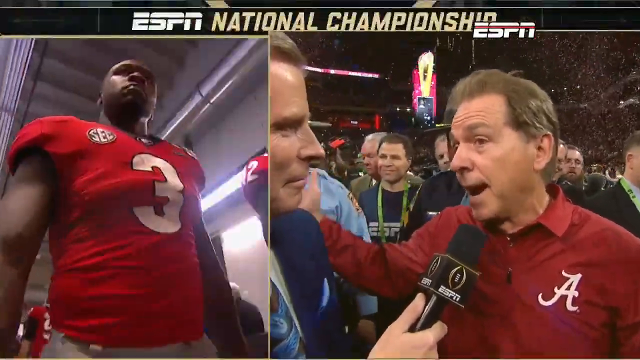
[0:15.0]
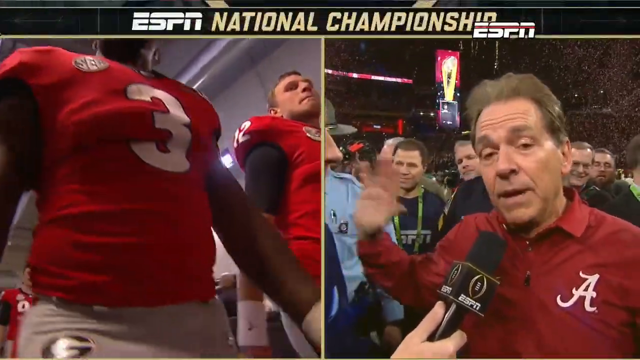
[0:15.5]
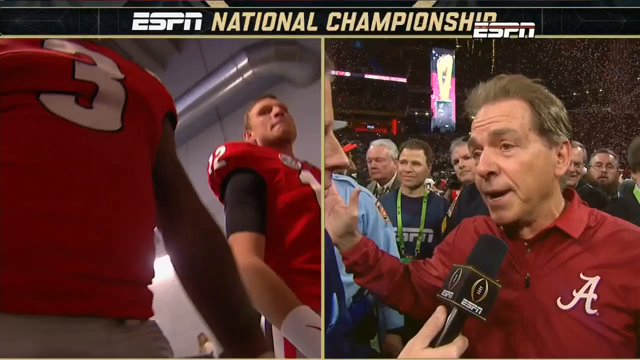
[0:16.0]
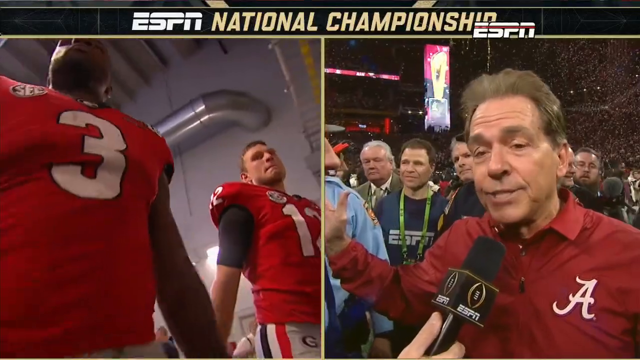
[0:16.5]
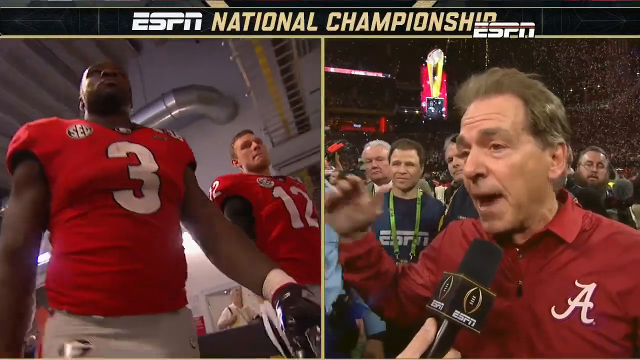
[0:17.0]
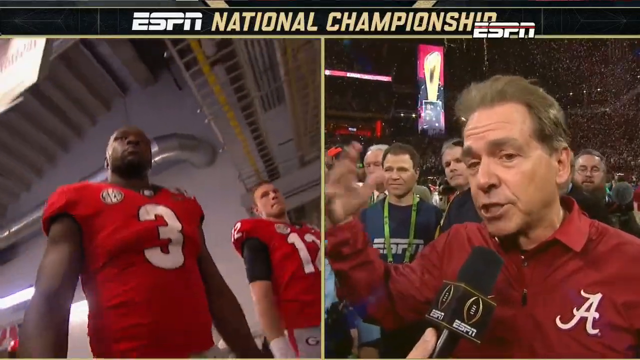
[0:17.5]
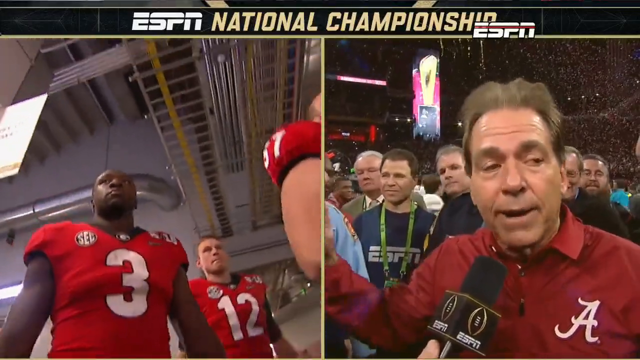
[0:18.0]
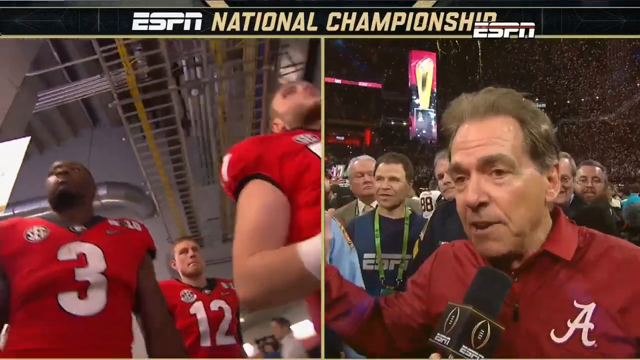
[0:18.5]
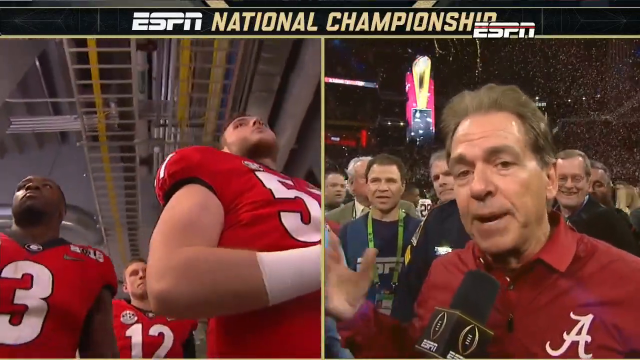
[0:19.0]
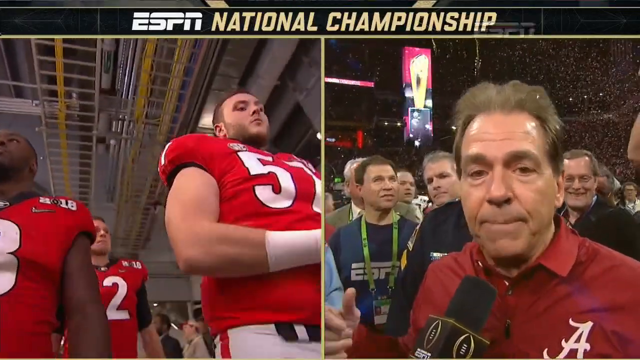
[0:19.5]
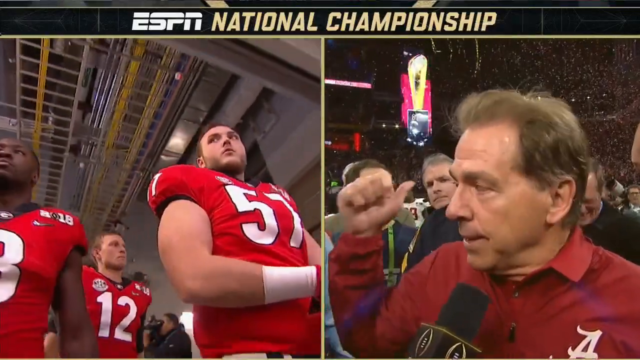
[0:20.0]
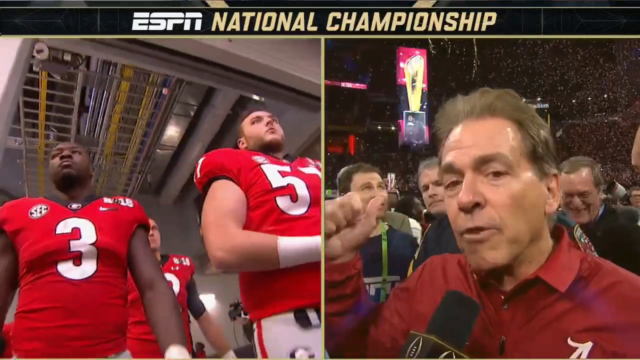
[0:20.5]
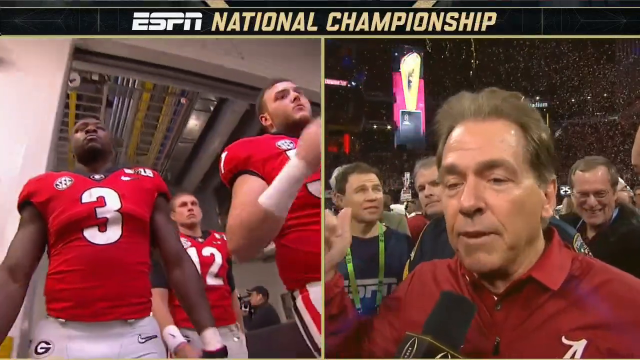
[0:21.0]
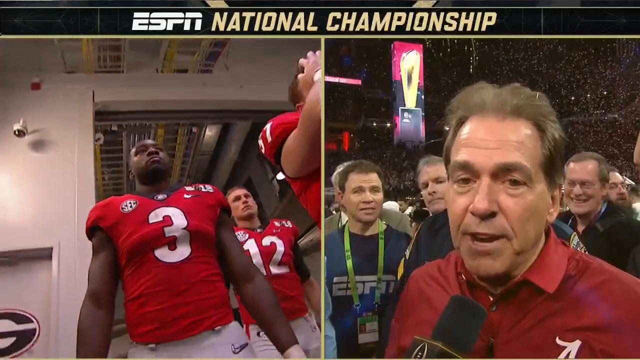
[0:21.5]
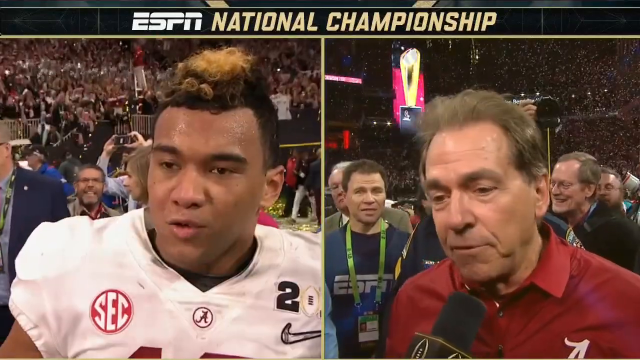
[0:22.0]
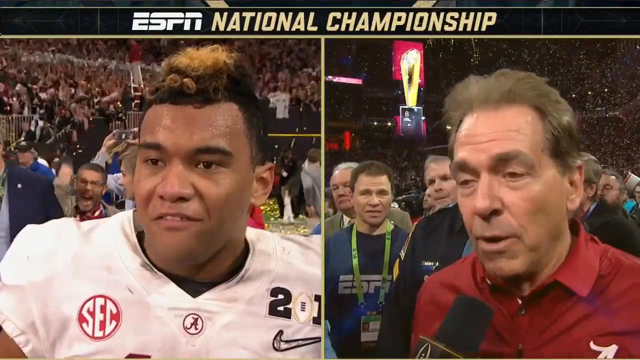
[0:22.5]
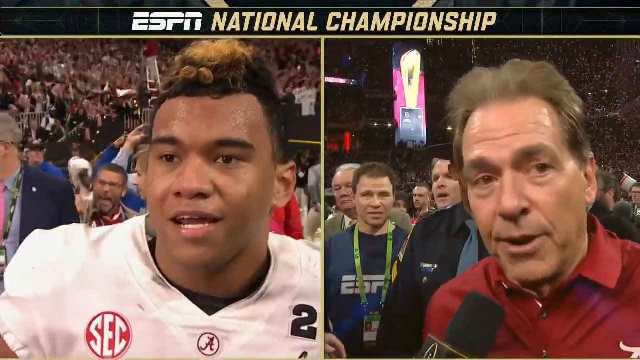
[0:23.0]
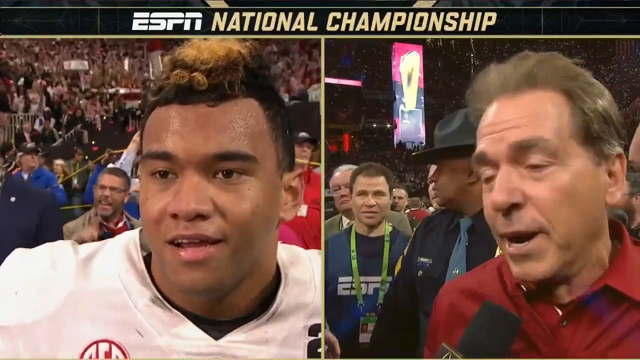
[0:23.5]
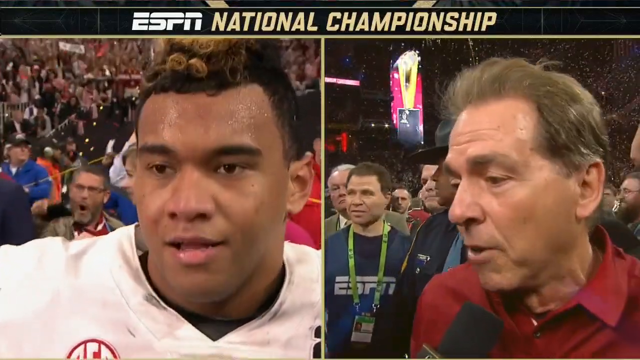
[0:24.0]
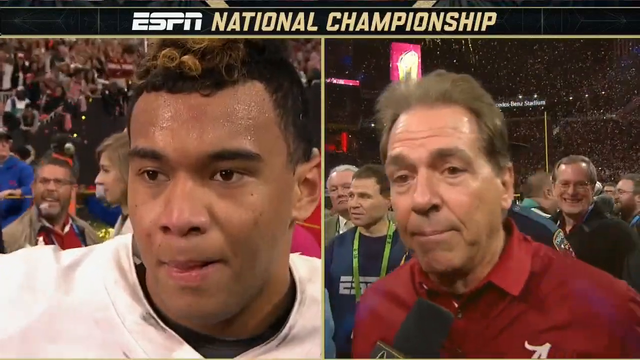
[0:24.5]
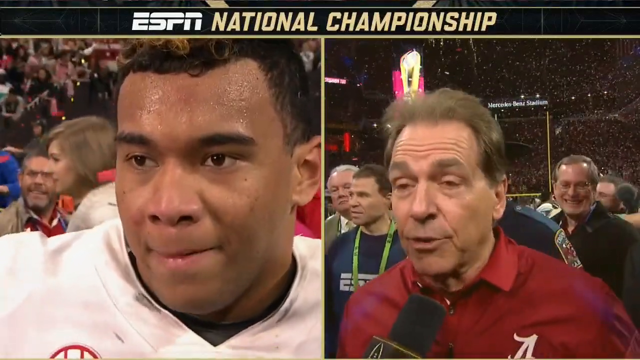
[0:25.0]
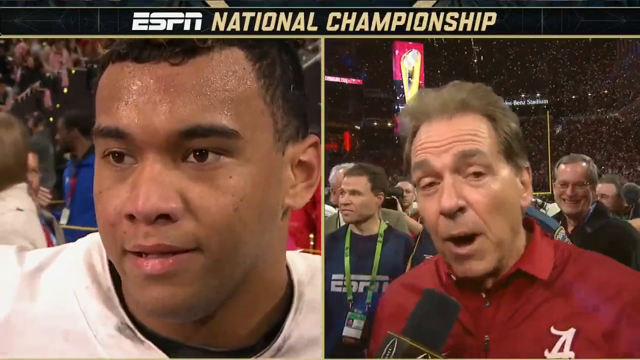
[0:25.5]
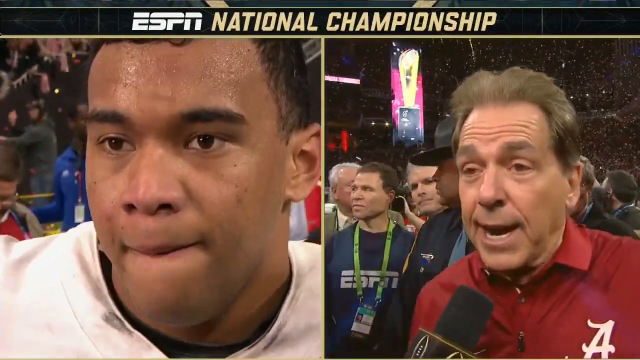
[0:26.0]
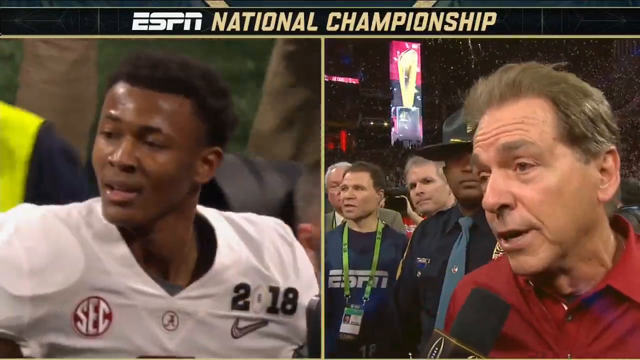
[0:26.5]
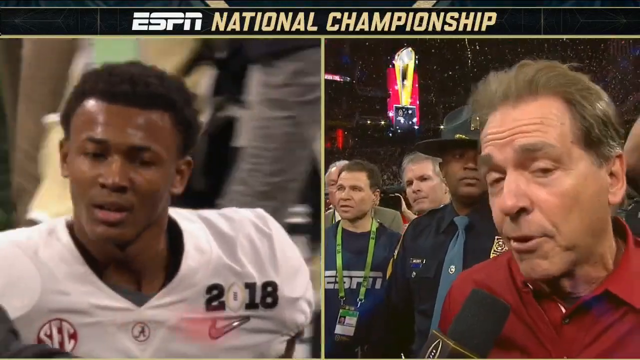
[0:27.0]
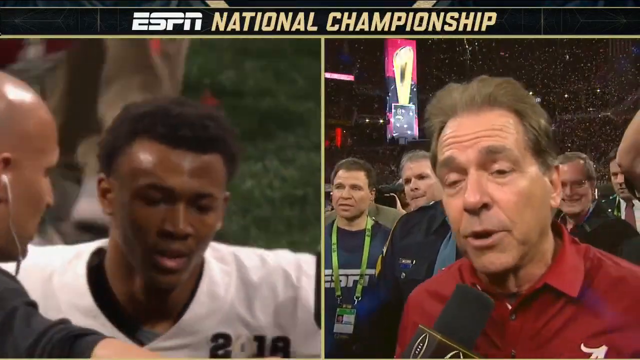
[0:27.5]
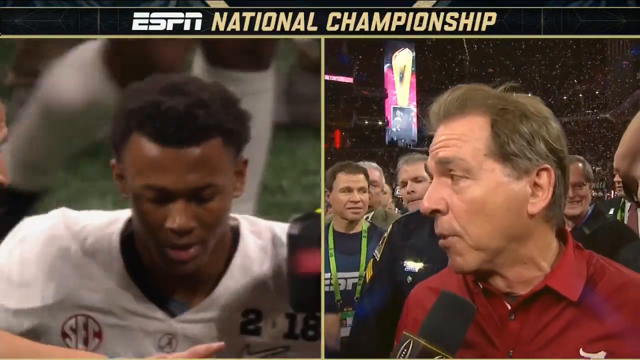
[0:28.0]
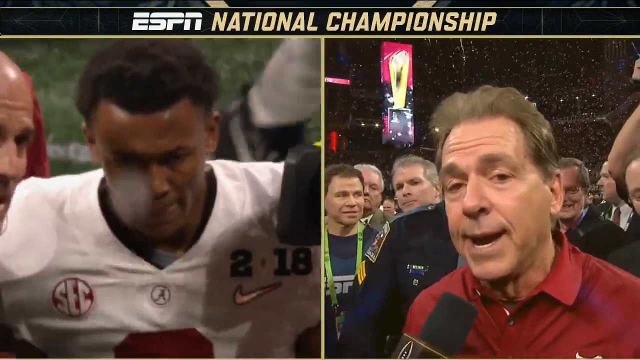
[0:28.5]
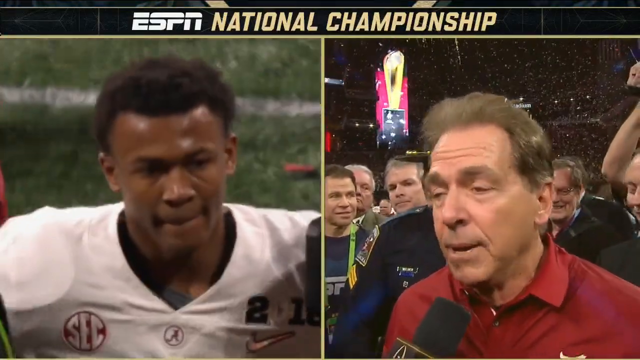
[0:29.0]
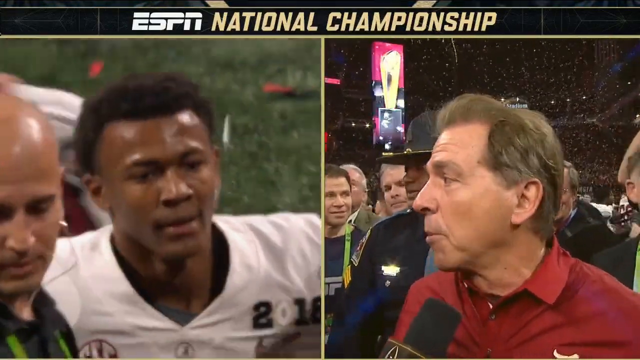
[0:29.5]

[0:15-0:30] ESPN coverage of the 2018 college football National Championship between Alabama and the Georgia Bulldogs continues with a post-game interview with Alabama coach Nick Saban. The video flashes to the Alabama quarterback celebrating, and to Georgia players who appear to be at a loss and probably disappointed. There is confetti and many people are celebrating. The Georgia quarterback is also shown, reacting differently from the Alabama quarterback. A split screen shows the Alabama coach and quarterback both talking at the same time. Most people are still on the field.